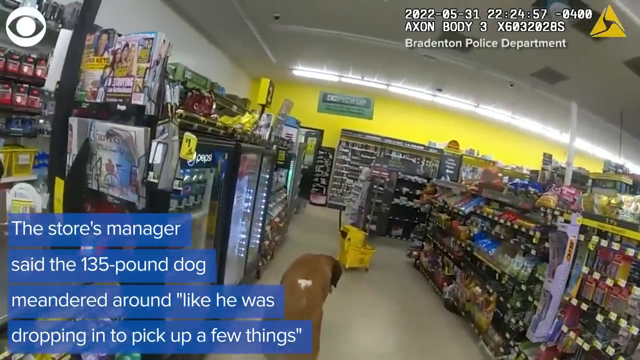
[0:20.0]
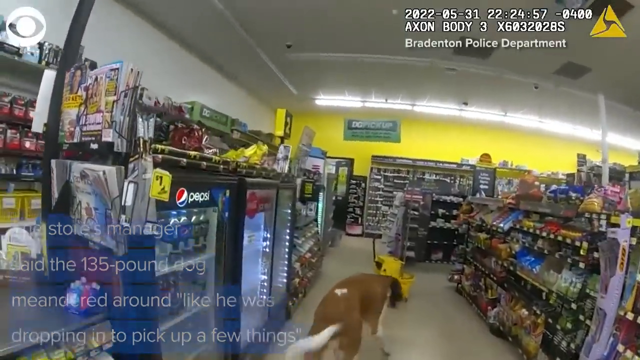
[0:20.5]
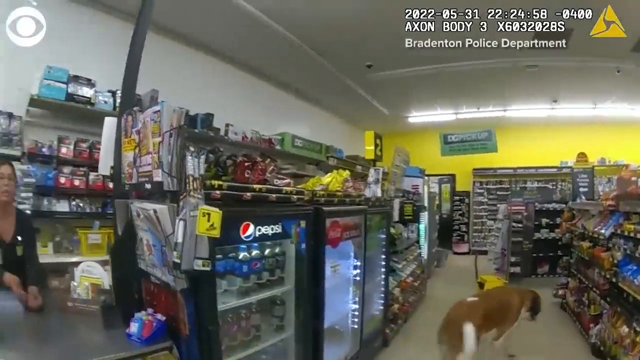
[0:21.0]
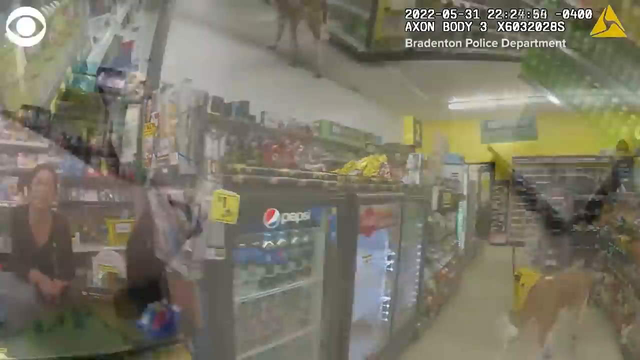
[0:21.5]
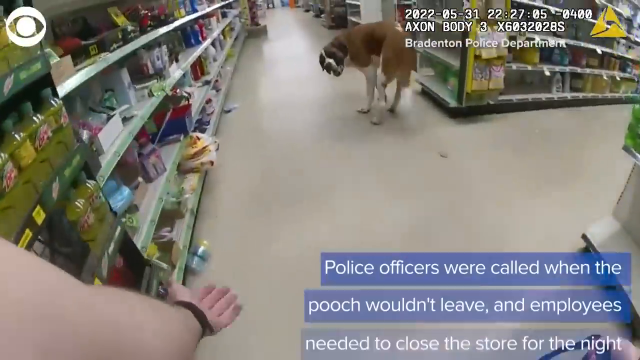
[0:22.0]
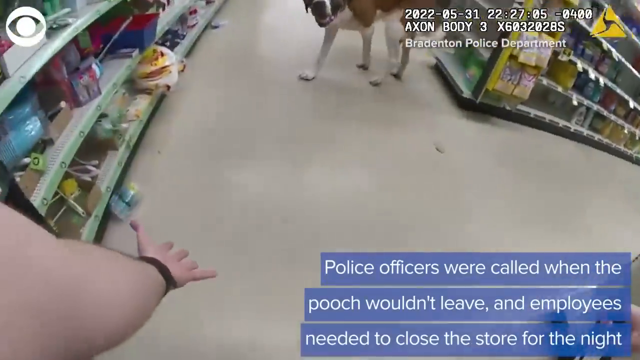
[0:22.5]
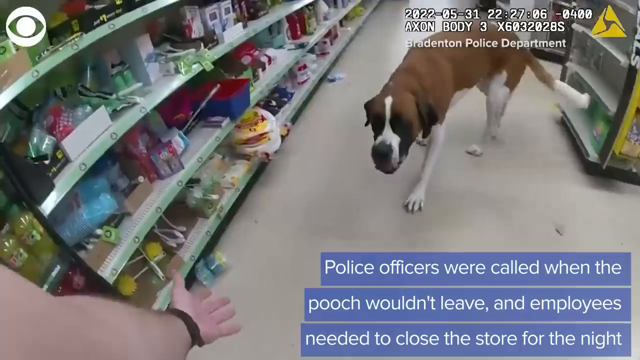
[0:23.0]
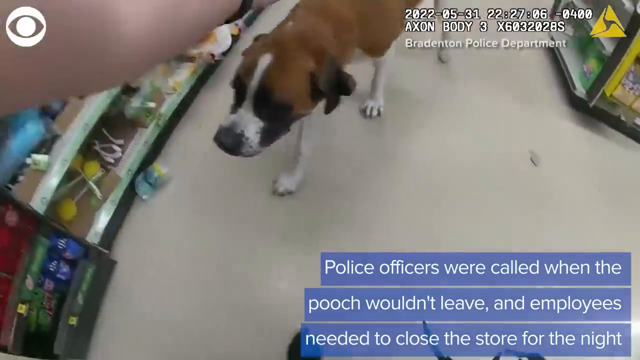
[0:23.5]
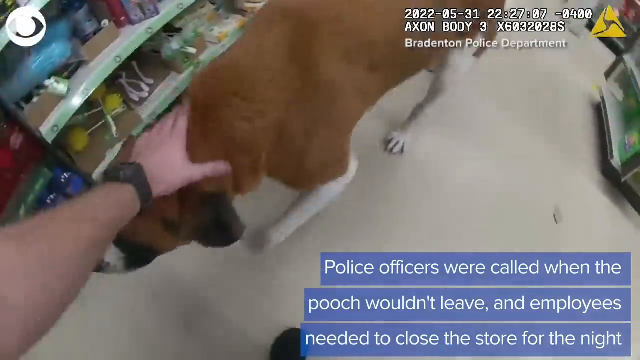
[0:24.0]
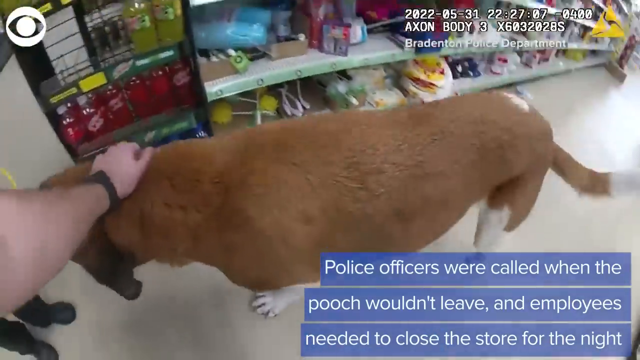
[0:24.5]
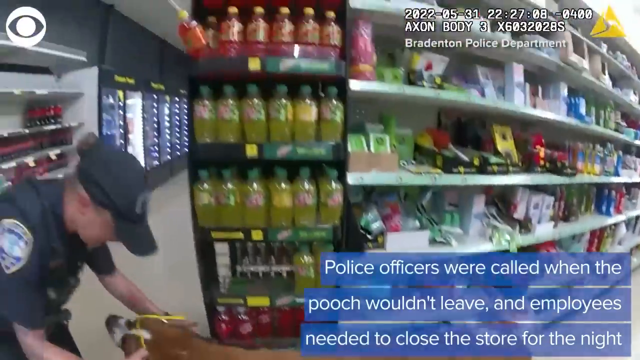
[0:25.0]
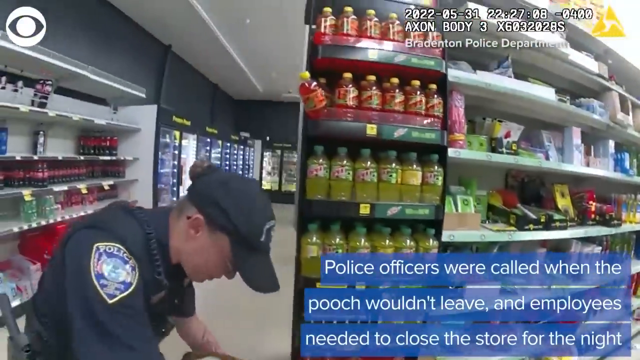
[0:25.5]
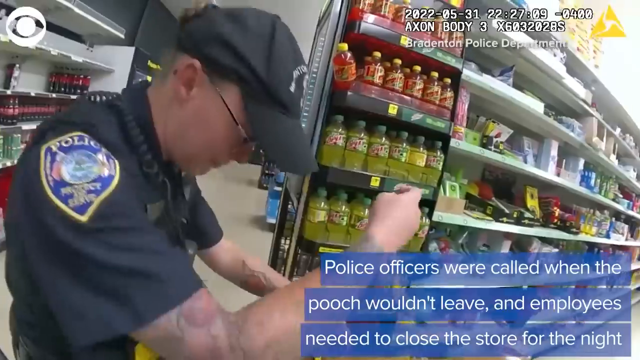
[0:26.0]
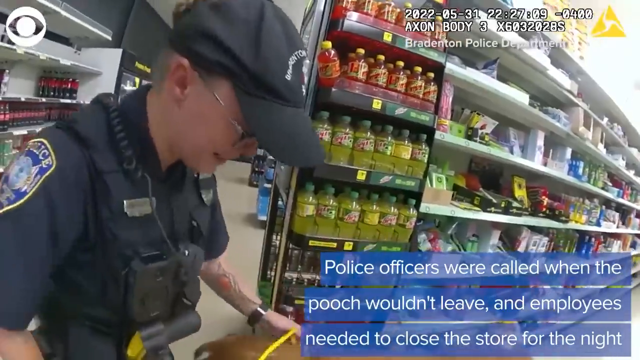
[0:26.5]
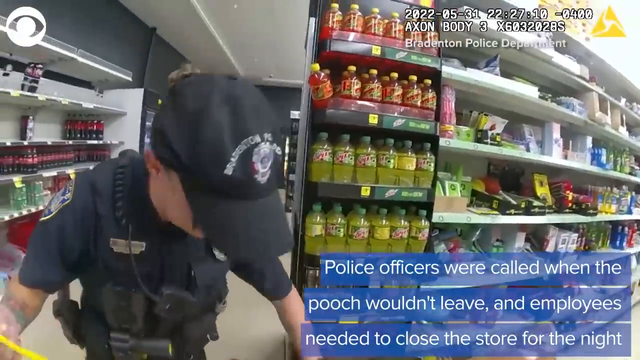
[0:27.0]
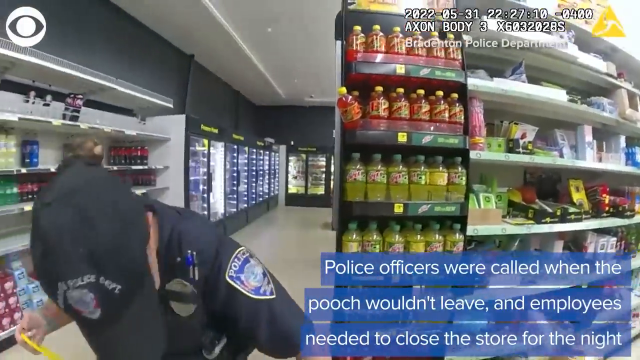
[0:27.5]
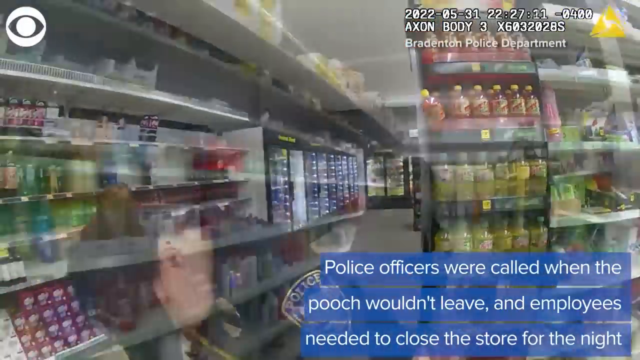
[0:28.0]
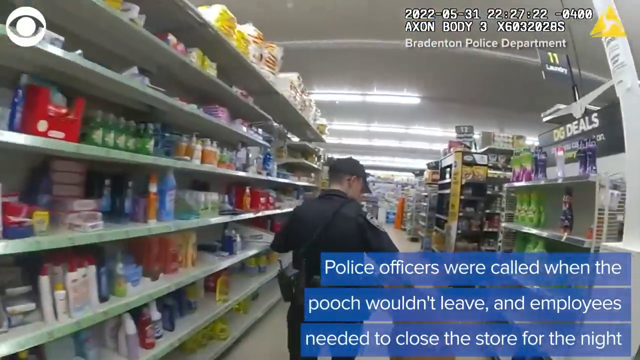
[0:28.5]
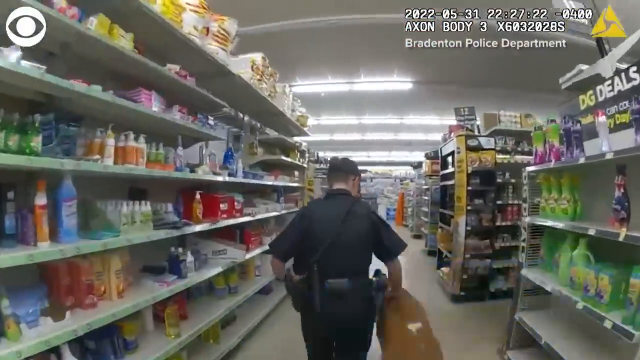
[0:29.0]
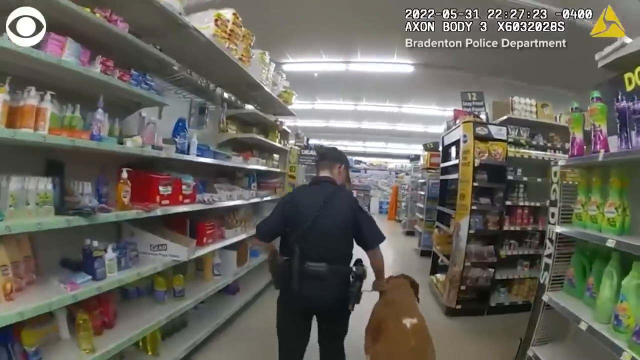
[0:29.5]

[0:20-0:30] The body cam footage continues as the St. Bernard walks through the aisles of the Family Dollar store in Bradenton, Florida. A Bradenton police officer puts his hand out, inviting the dog to his hand so he can put it on a leash, but the dog will not leave. Animal Control then arrives, and an officer puts the dog on a leash and walks it out of the store.